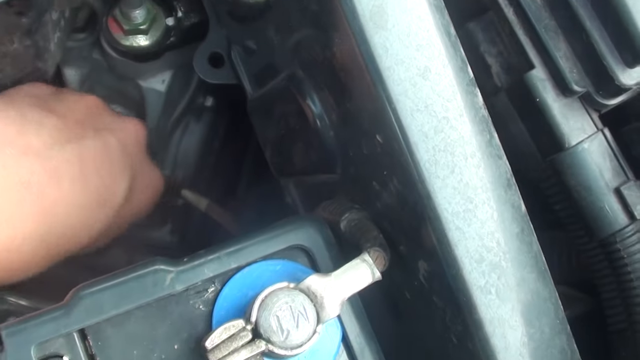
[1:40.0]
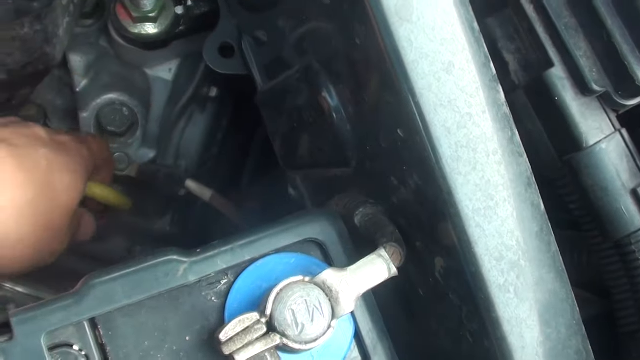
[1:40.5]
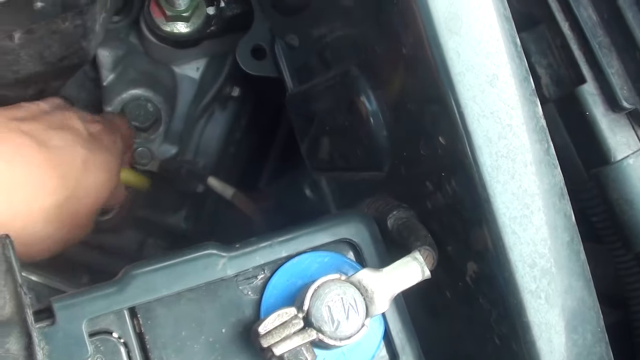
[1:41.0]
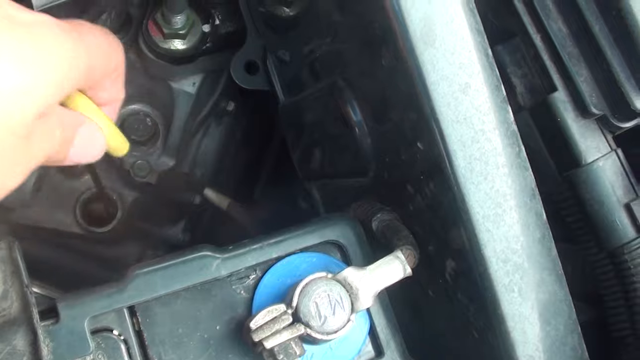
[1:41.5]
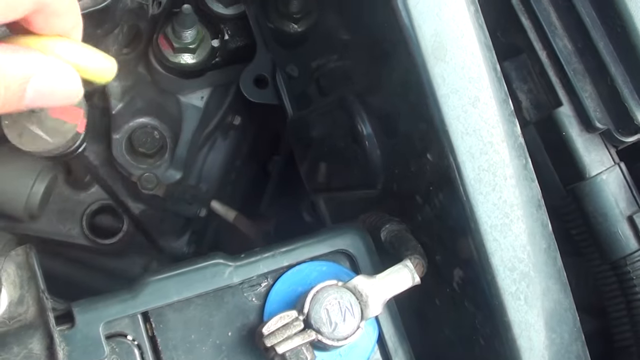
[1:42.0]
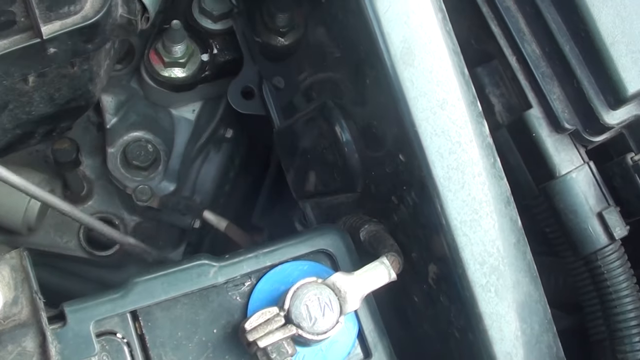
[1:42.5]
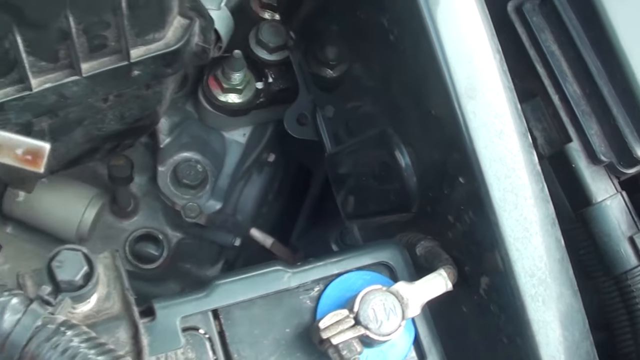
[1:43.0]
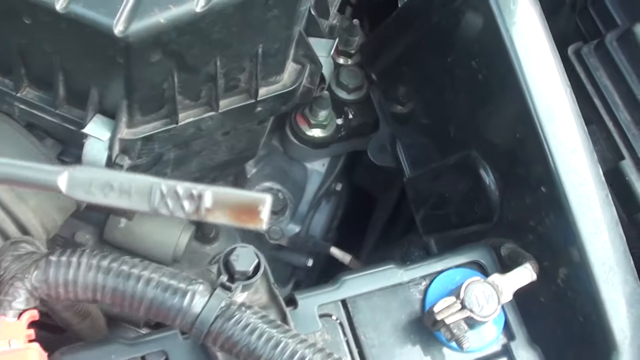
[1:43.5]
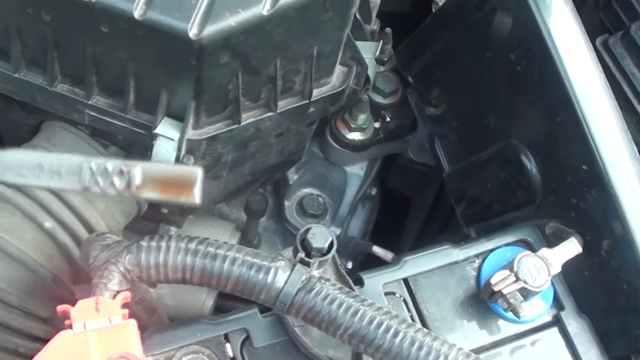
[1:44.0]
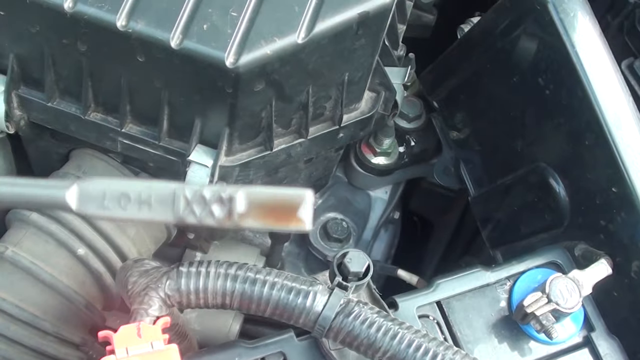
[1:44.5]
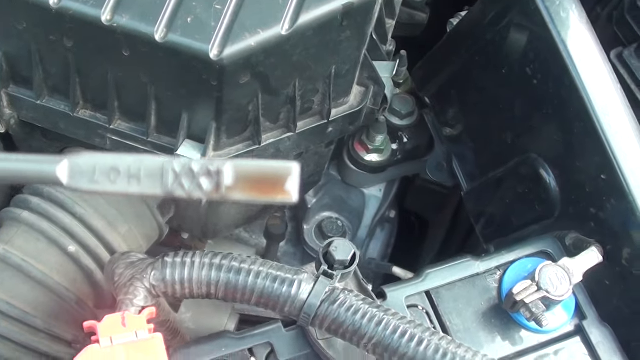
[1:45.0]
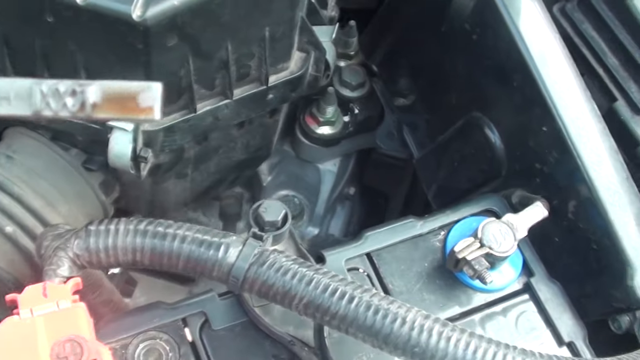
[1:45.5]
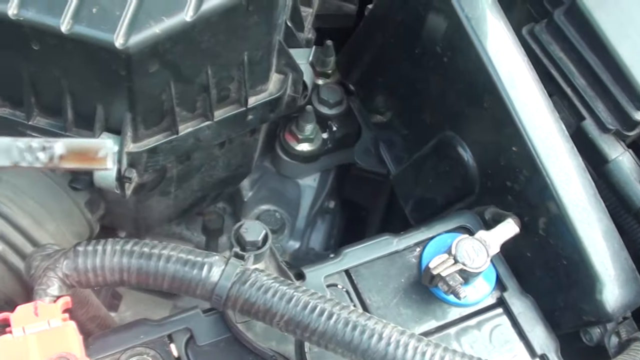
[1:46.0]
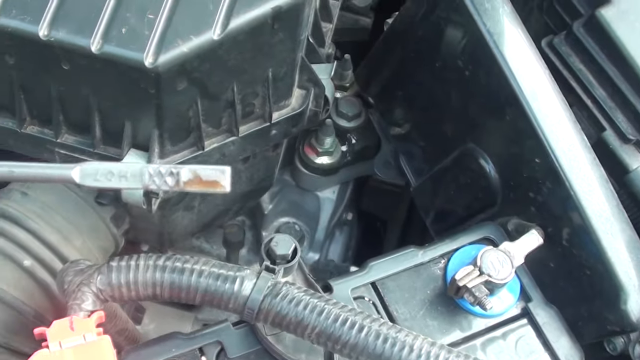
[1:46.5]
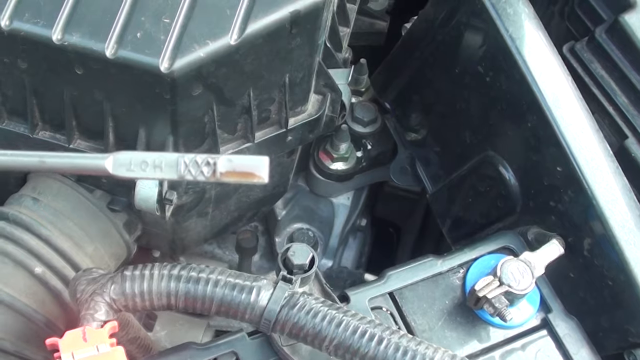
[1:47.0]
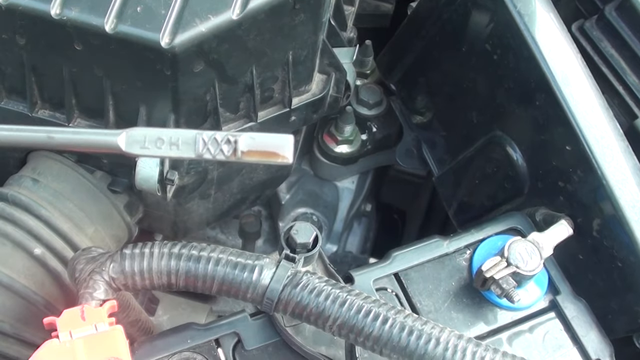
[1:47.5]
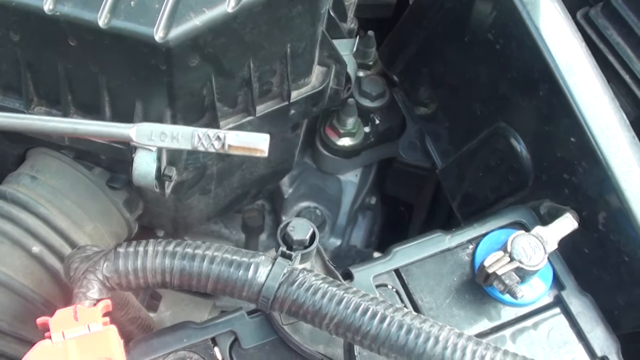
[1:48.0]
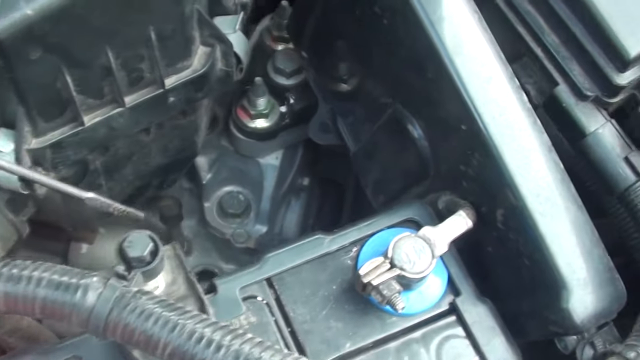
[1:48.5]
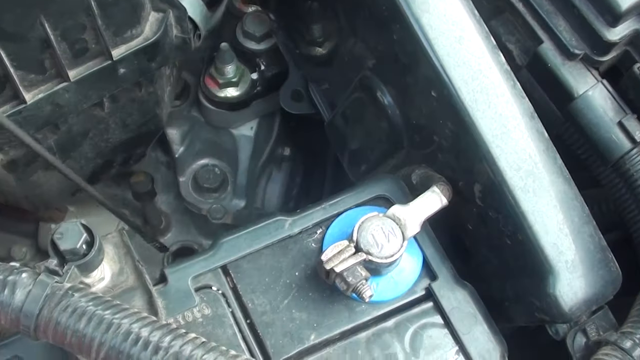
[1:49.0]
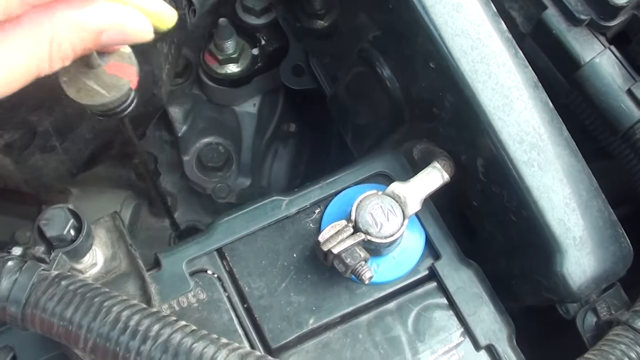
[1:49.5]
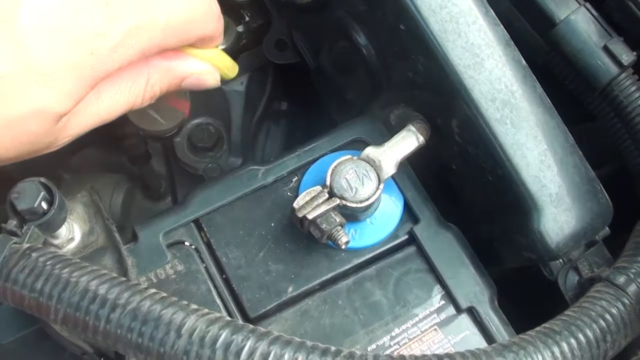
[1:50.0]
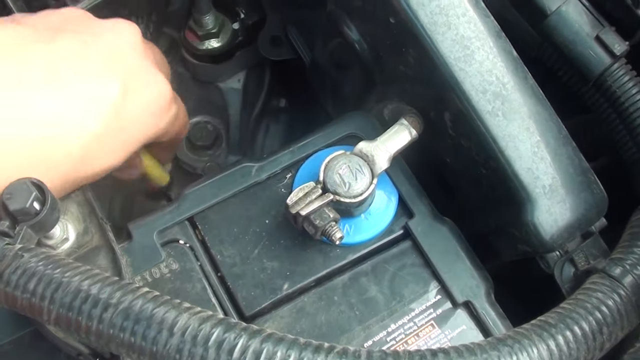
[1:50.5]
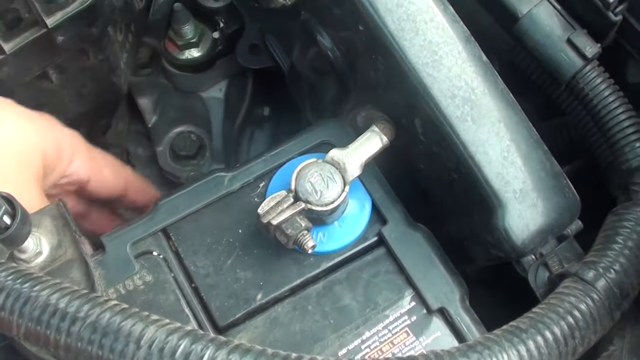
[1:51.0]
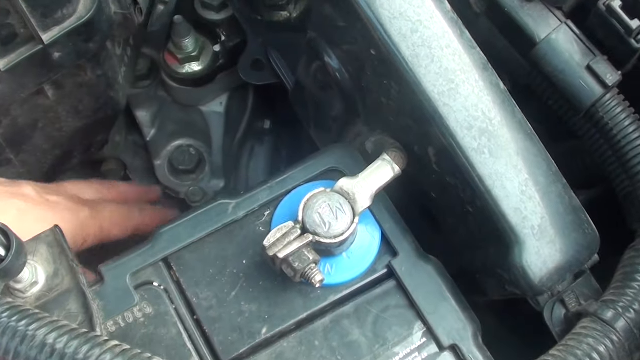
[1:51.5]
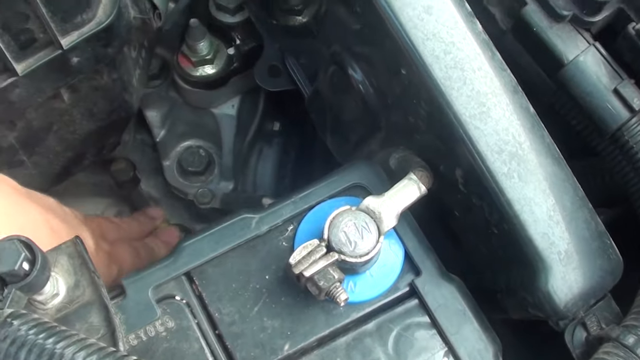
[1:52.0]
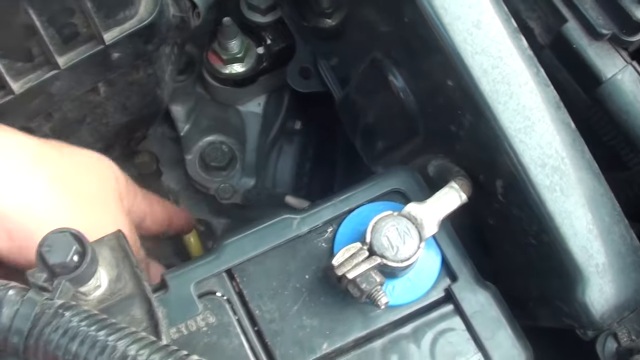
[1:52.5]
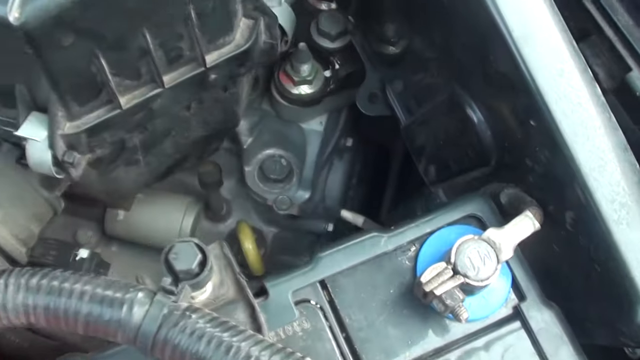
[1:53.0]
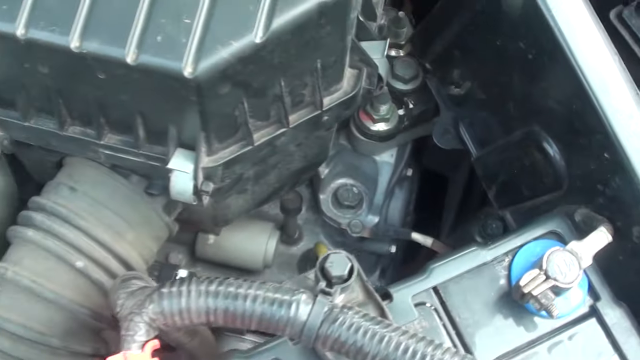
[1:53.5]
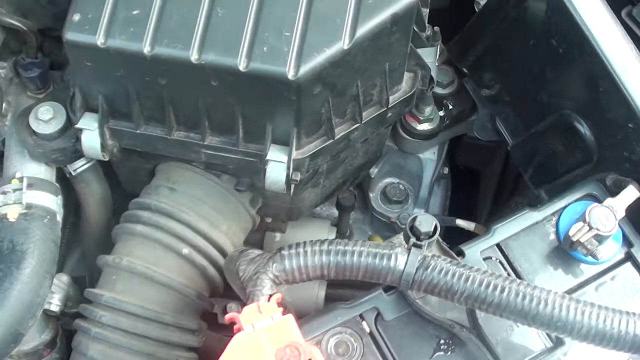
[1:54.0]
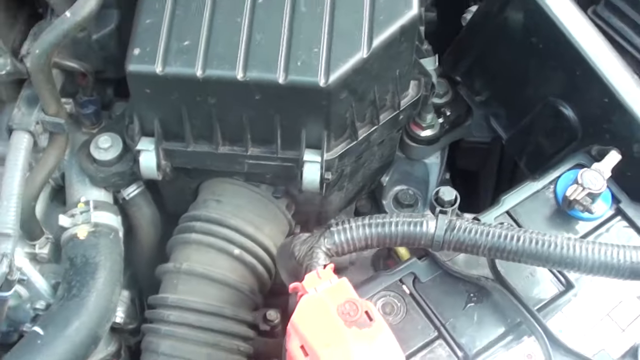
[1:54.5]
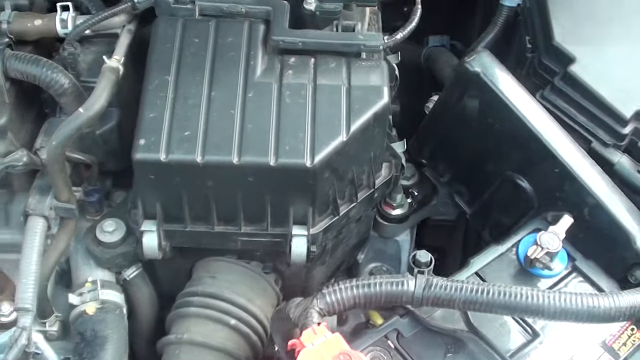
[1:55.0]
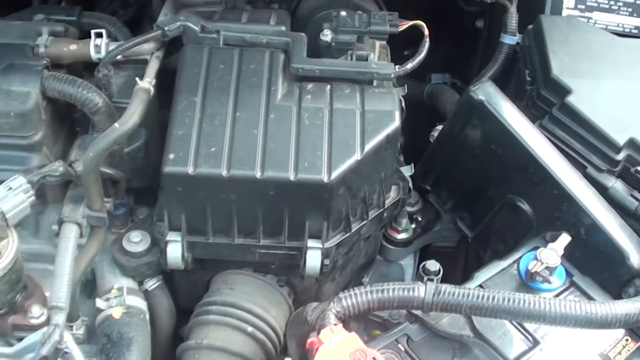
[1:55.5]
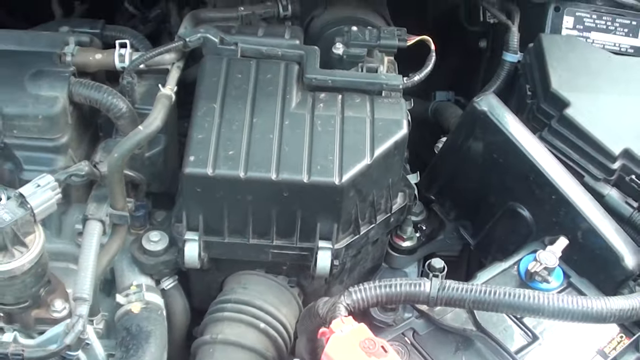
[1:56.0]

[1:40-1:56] A white hand holds a yellow handle with a stick attached, puts the oil stick down into a hole in the car engine, pulls it out, and shows it to the camera to show how much oil is in the car. The oil is clearly visible on the edge of the stick, reflecting the light in the background. Behind the stick are many car parts, including the battery. The oil stick has the word "HOT" and some criss-cross X's on it. The person then reaches back down, lets the stick slide down into the hole, and presses firmly to lock it into place. The camera backs up a little to show more of the car: the air intake, the clips, the battery, and many wires and tubes connected to different parts of the car. The sequence demonstrates checking the oil by pushing the stick back in, pulling it out again, and looking at the oil to see if the car has enough.